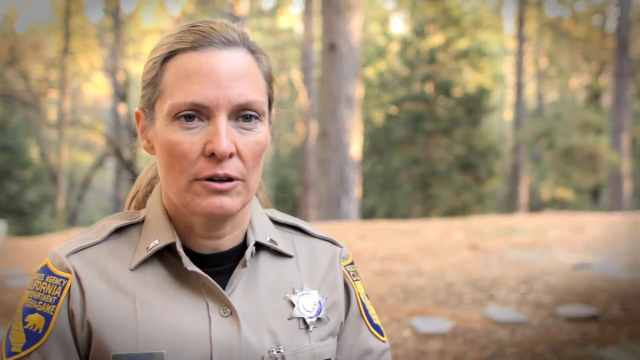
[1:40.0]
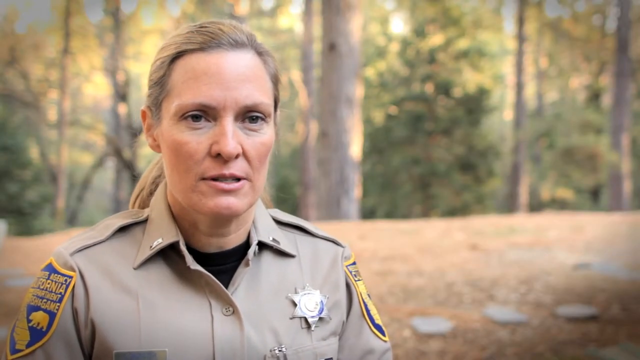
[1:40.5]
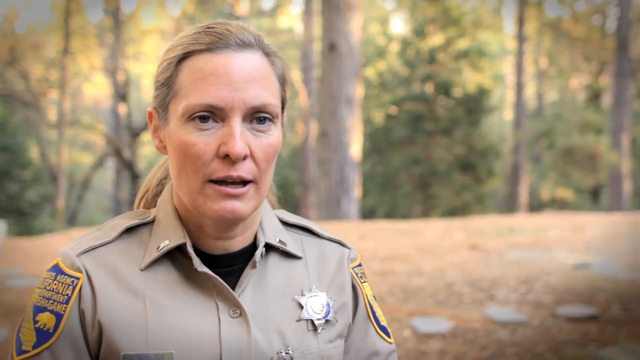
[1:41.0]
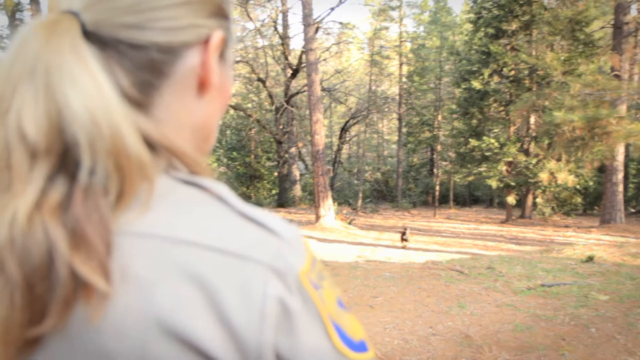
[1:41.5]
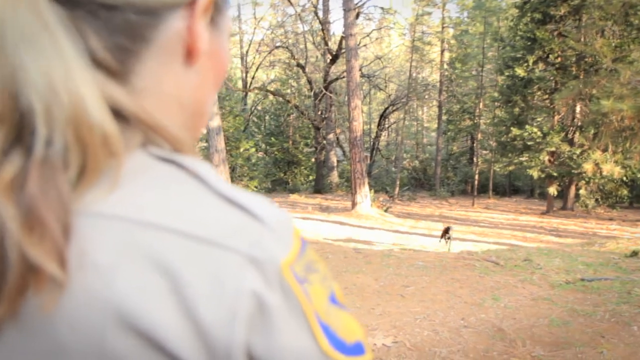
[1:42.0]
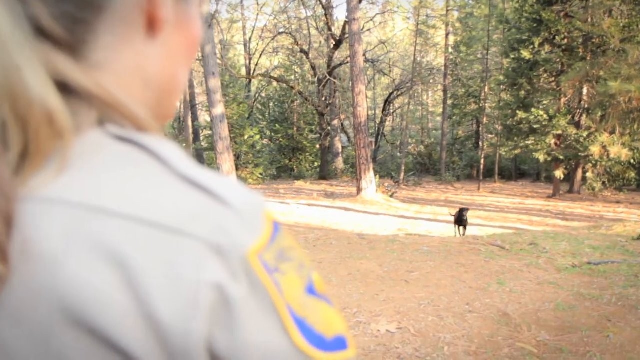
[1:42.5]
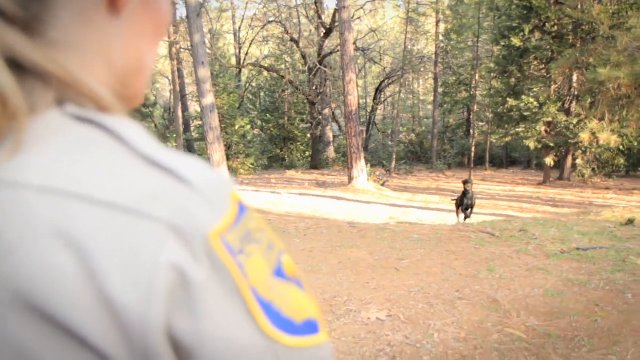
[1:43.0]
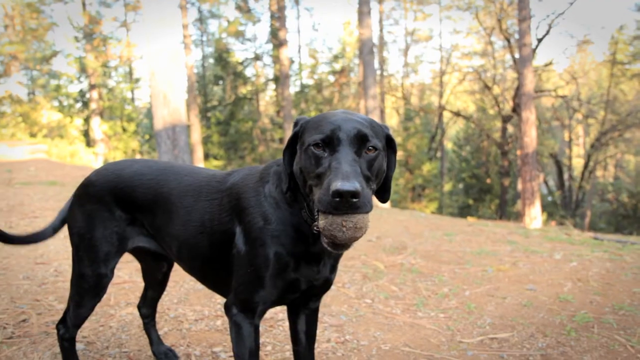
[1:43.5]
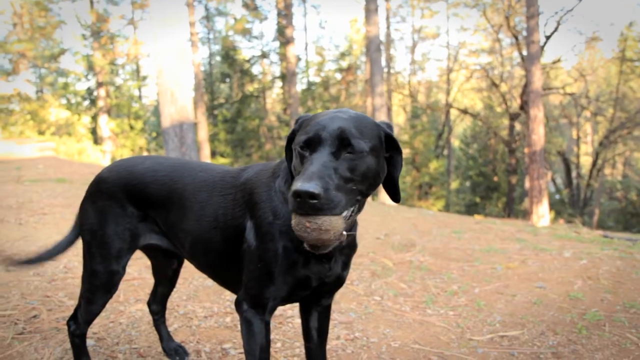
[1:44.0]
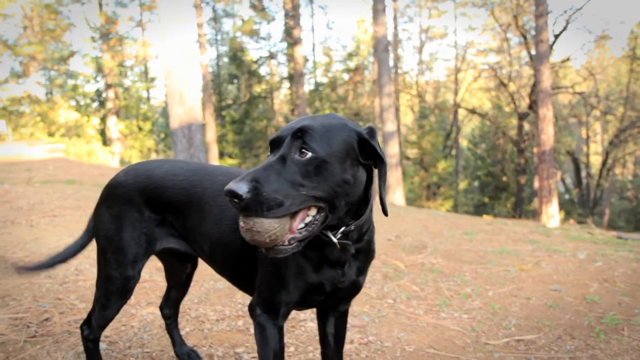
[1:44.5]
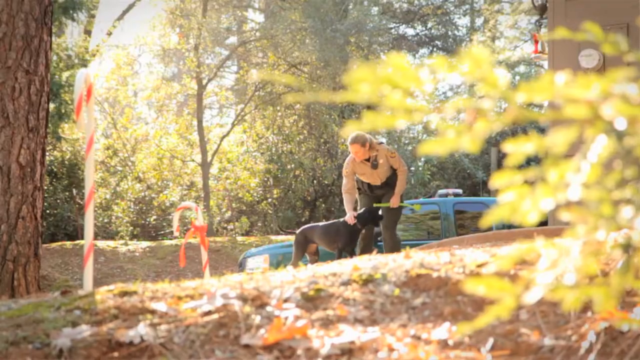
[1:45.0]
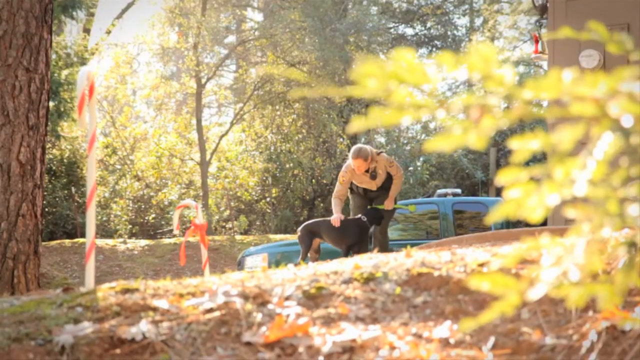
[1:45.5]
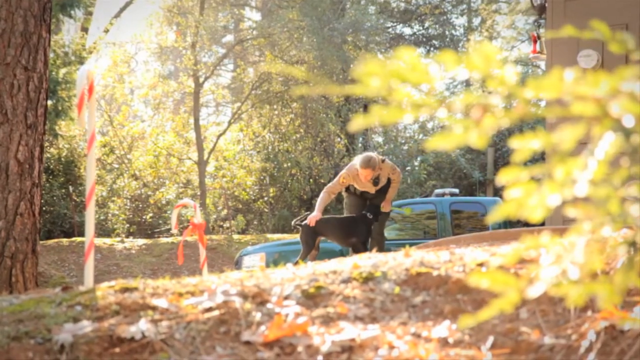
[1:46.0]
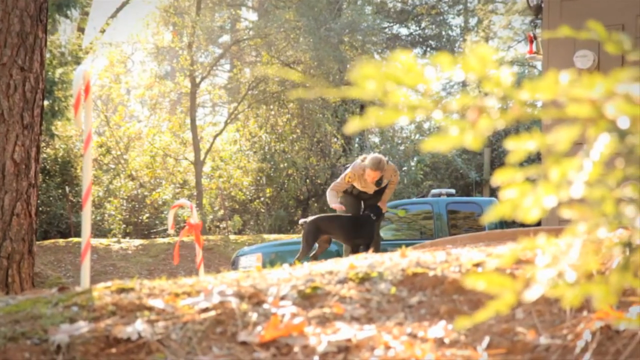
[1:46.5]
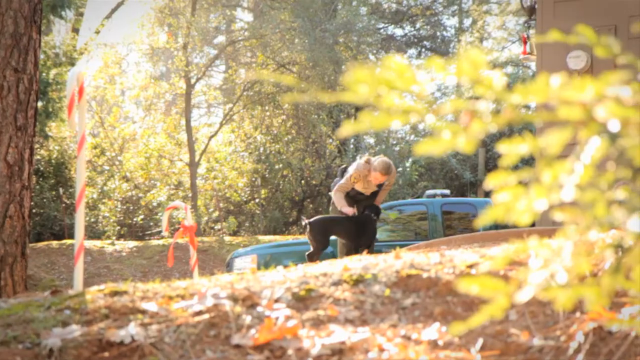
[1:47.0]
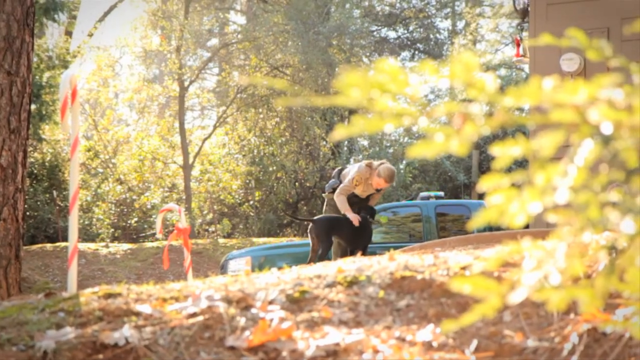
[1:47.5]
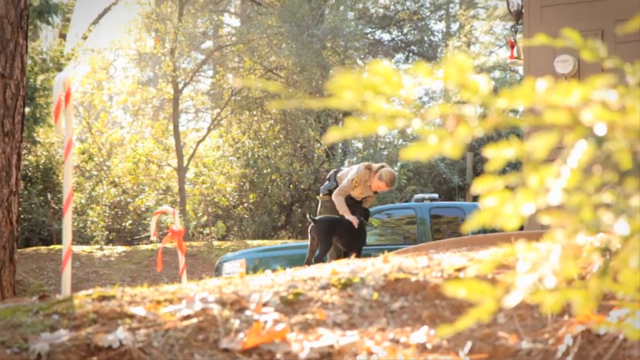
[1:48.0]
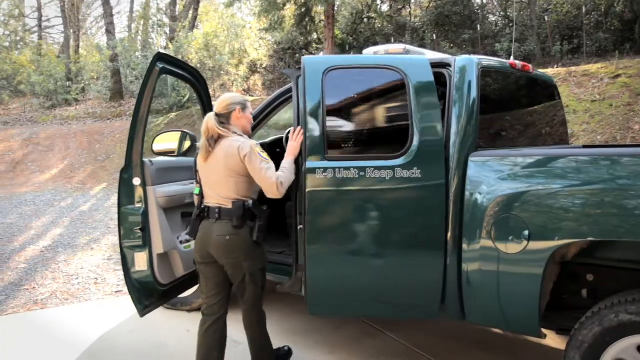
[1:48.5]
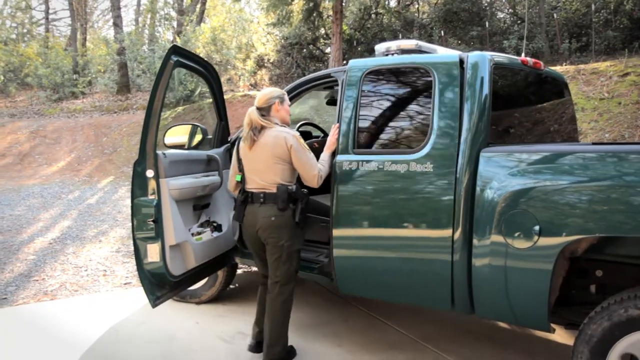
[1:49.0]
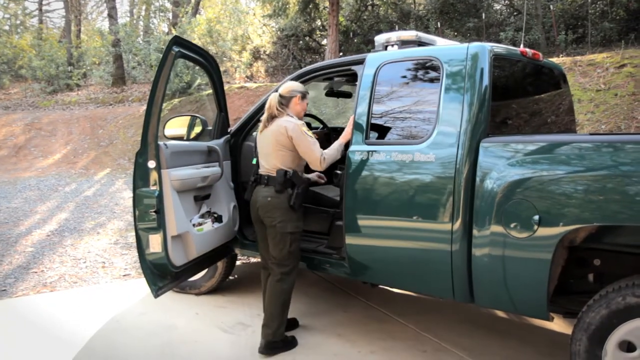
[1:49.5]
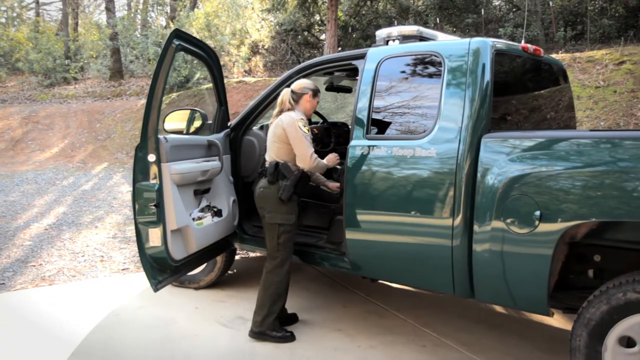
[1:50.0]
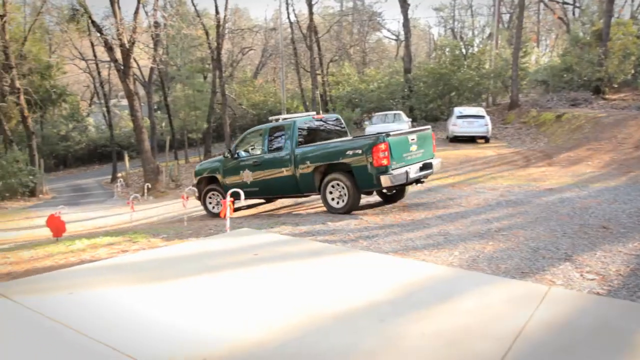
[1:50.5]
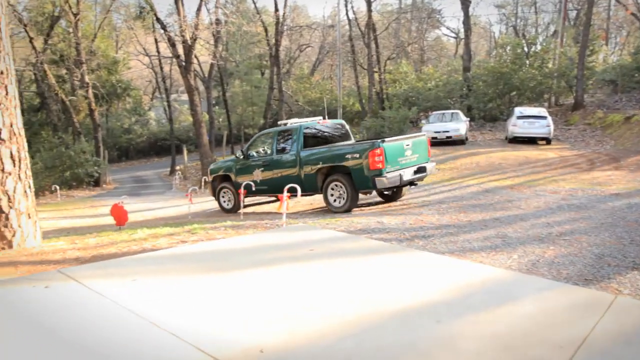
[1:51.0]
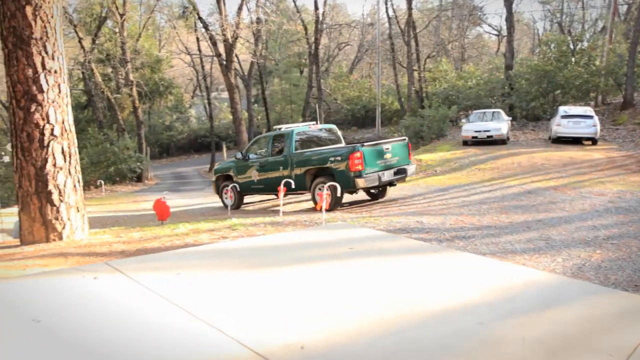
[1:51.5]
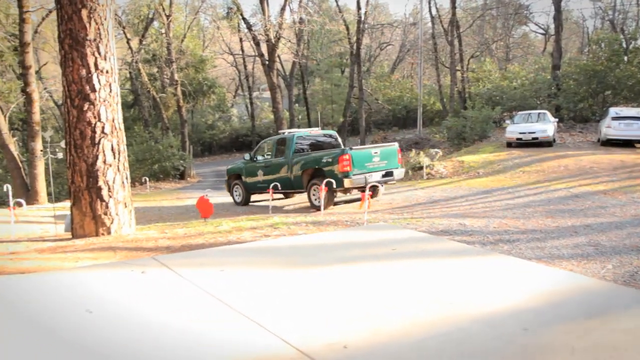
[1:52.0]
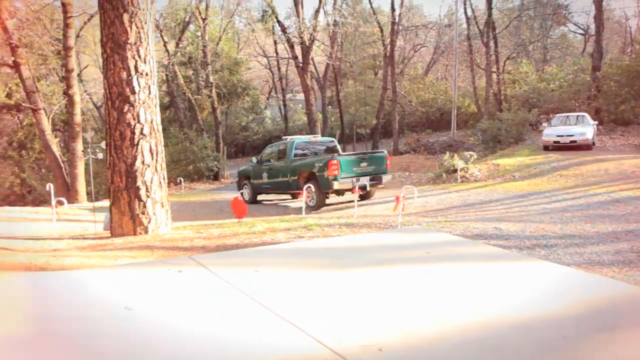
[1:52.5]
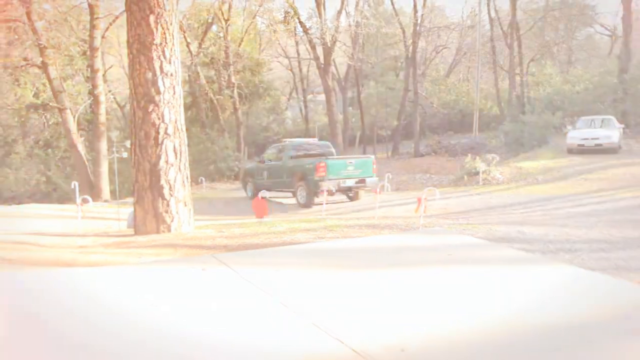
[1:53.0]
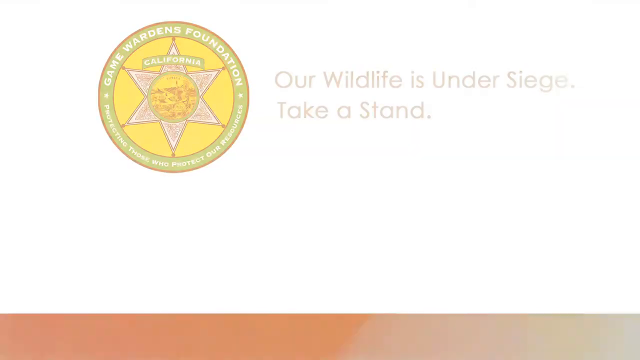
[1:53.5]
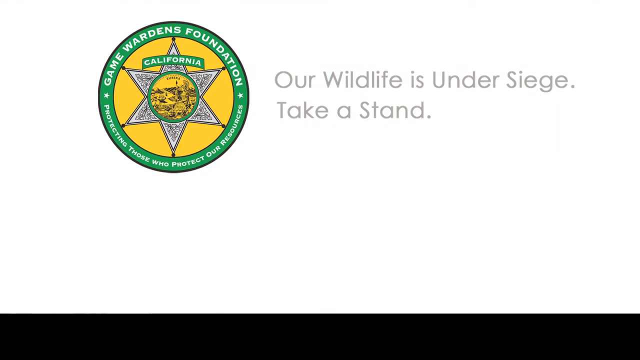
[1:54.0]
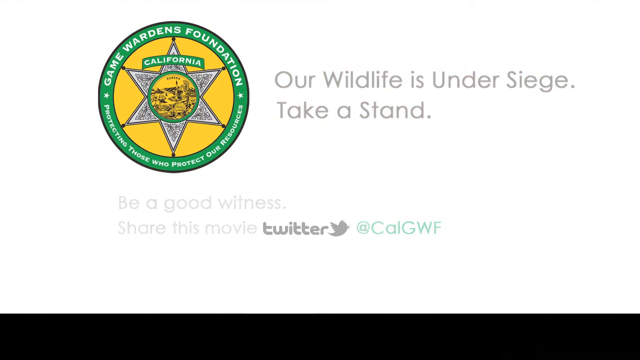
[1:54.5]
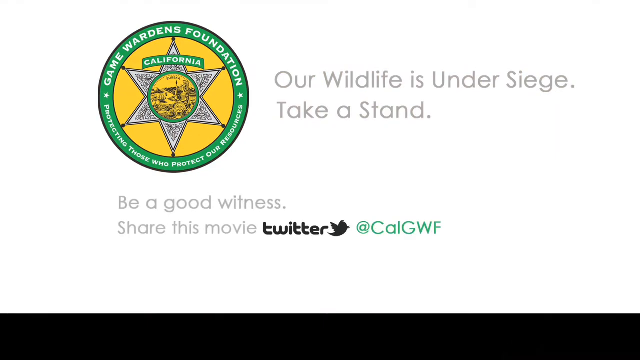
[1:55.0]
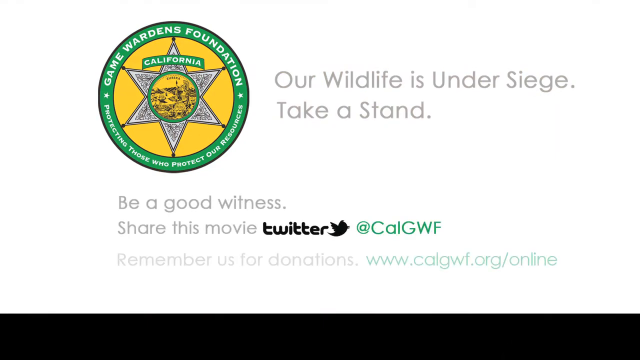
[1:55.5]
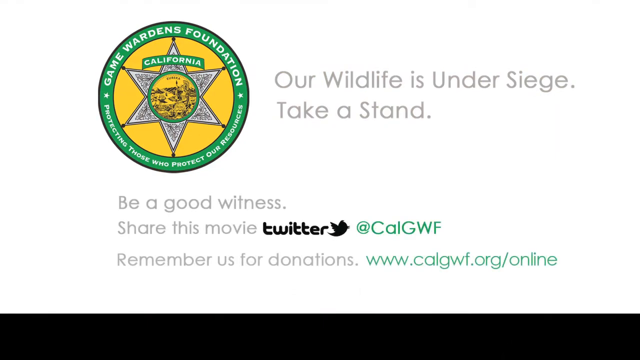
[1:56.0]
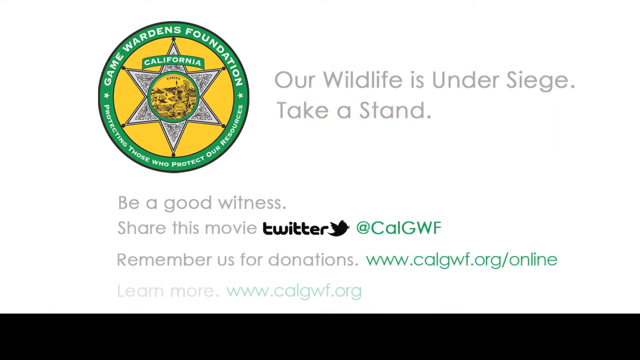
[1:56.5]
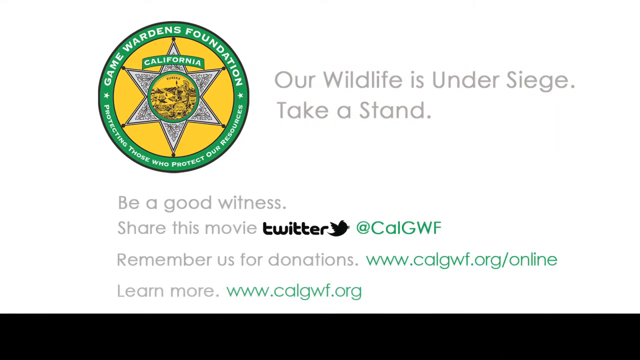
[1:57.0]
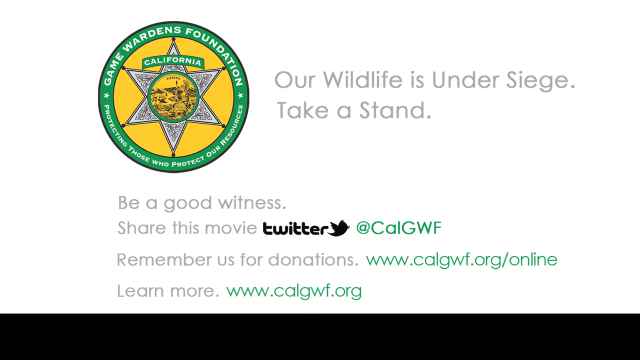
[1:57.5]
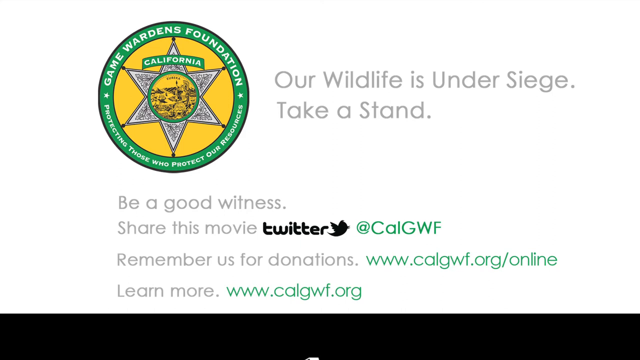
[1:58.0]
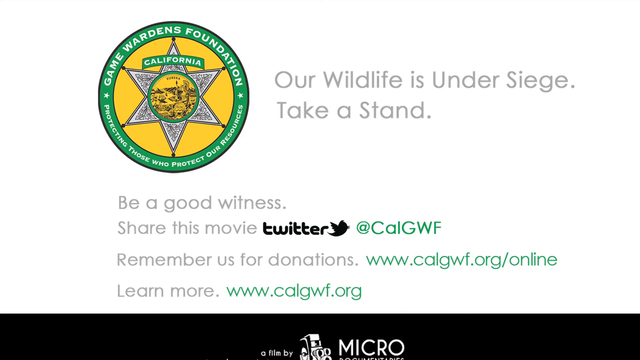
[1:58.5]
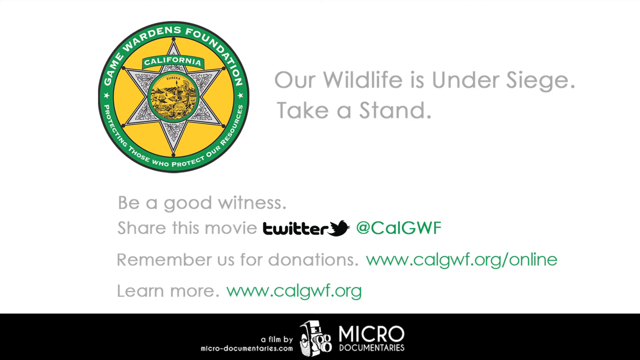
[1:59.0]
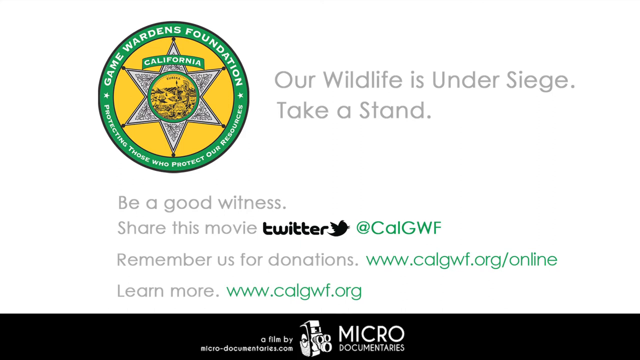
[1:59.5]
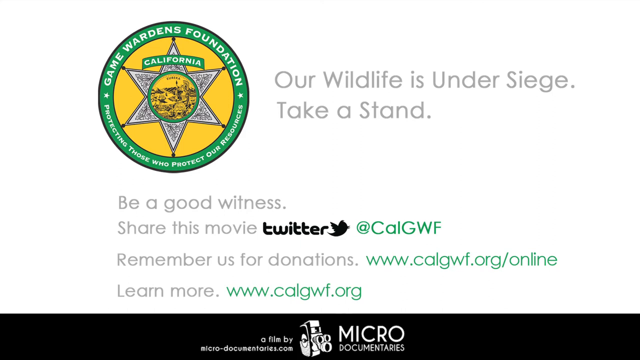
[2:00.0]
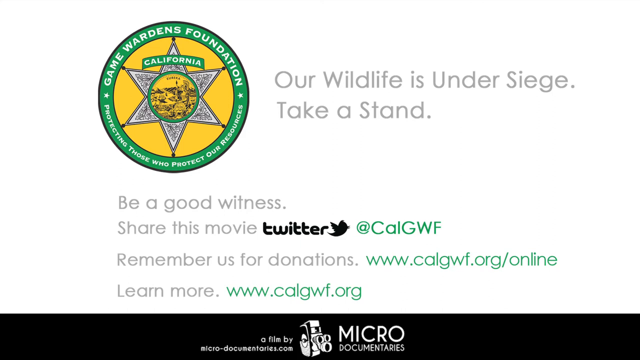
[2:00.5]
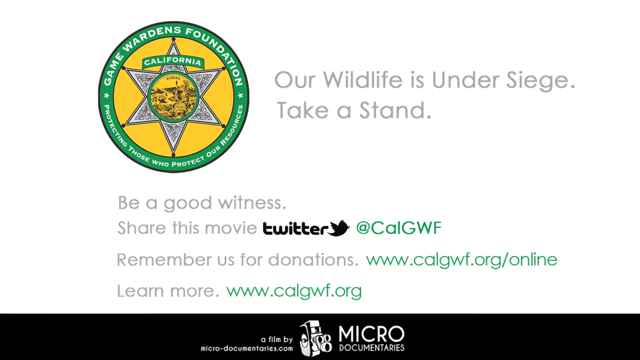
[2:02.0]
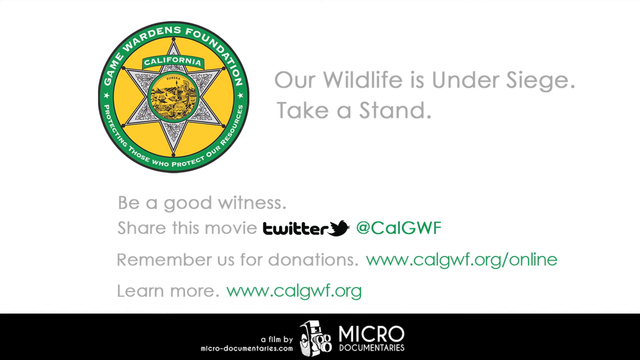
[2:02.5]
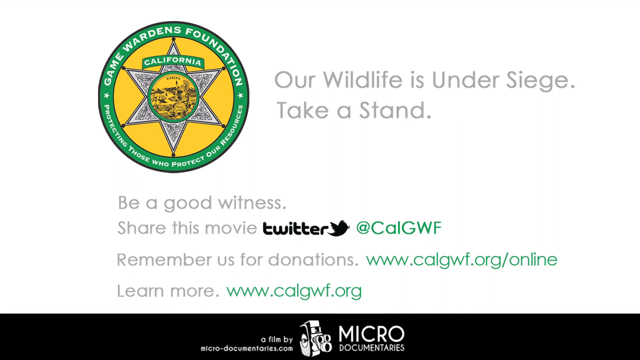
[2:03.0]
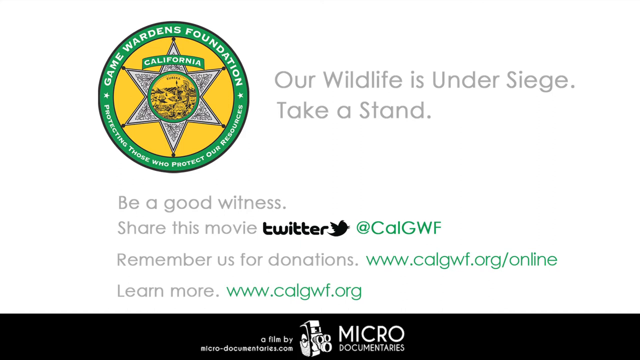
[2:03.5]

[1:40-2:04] Christy talks to the camera in front of the wooded forest. The dog comes back with the ball that Christy threw deep into the forest, galloping and using its front and back legs to gain momentum as it moves up the side of the hill. Next, the dog has the ball, which is covered in mud, in its mouth. The dog has a very shiny, healthy coat and wags its tail with the ball in its mouth. Christy pets the dog's back and pats its side. They close the back door of their car and leave the area where they were playing. A logo for the Games Wardens Foundation is shown on the last page. Text on a white background says "Our wildlife is under siege, take a stand." Text also says to share this movie on Twitter and to send donations.